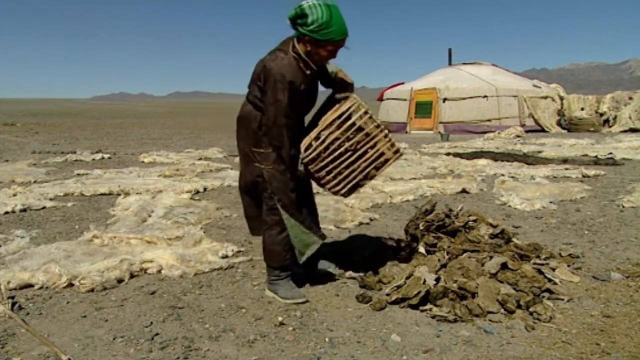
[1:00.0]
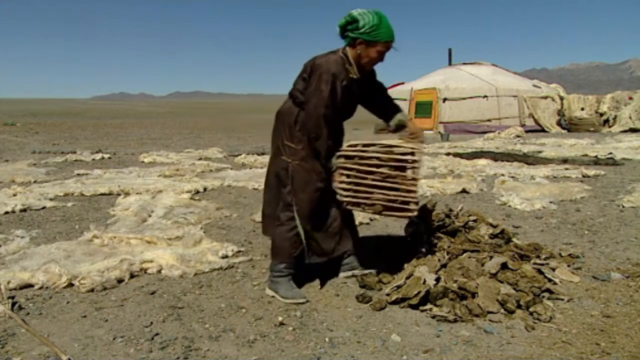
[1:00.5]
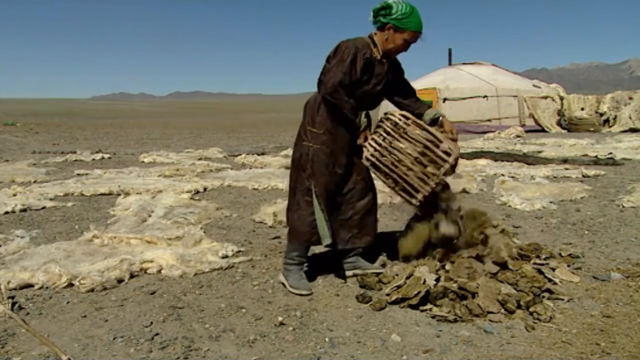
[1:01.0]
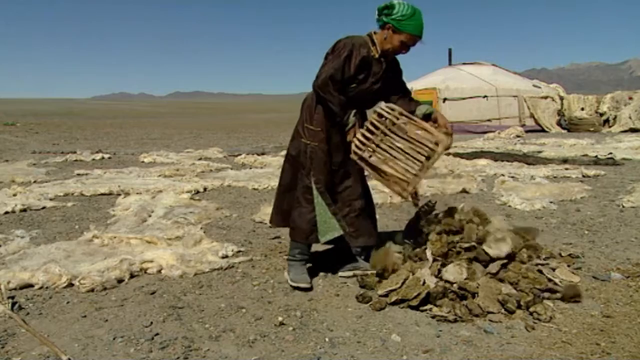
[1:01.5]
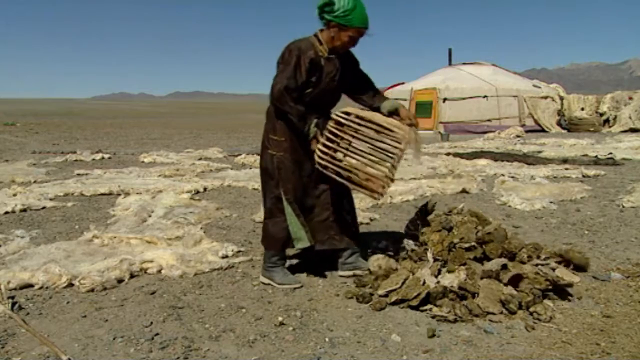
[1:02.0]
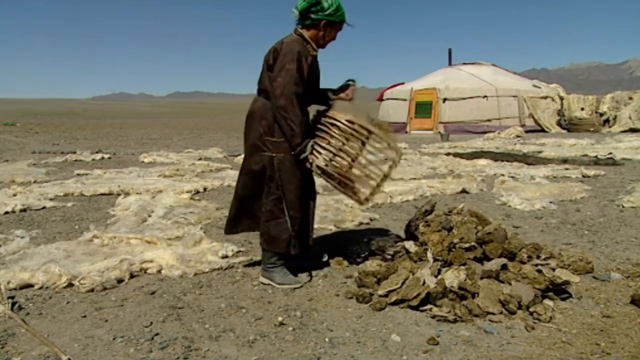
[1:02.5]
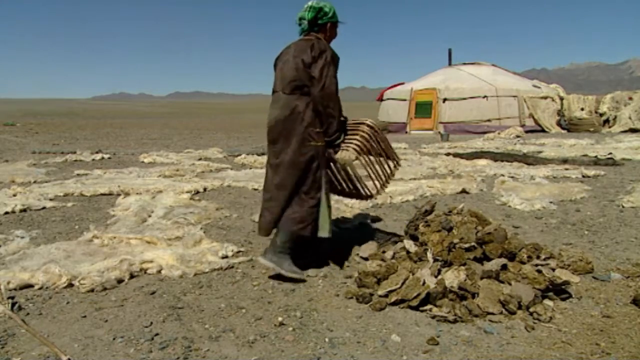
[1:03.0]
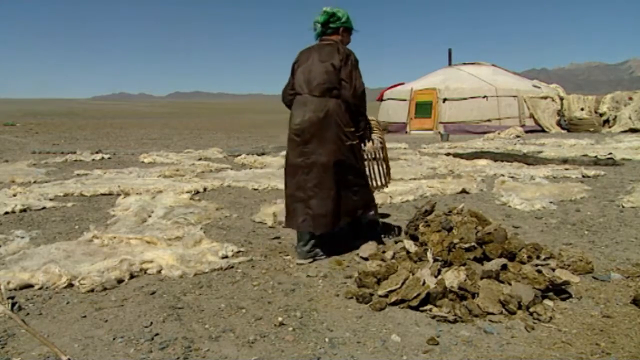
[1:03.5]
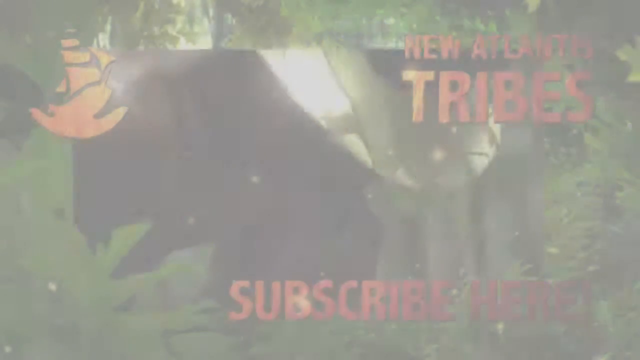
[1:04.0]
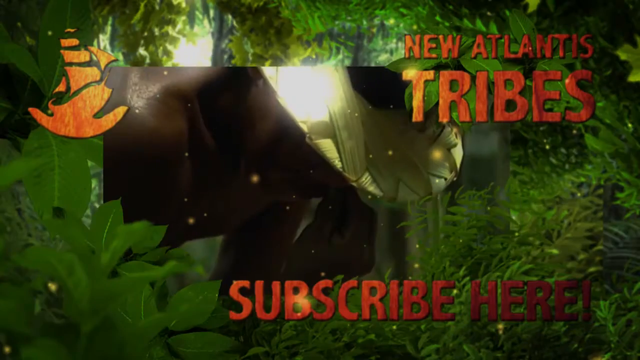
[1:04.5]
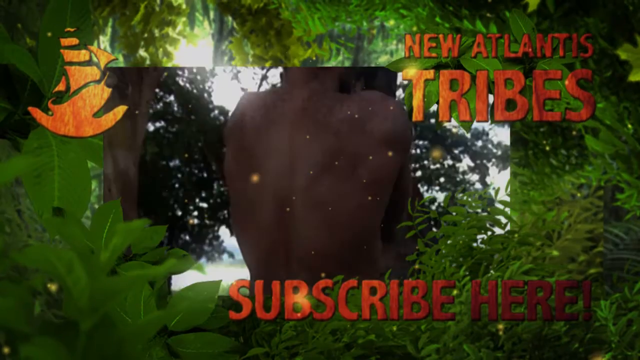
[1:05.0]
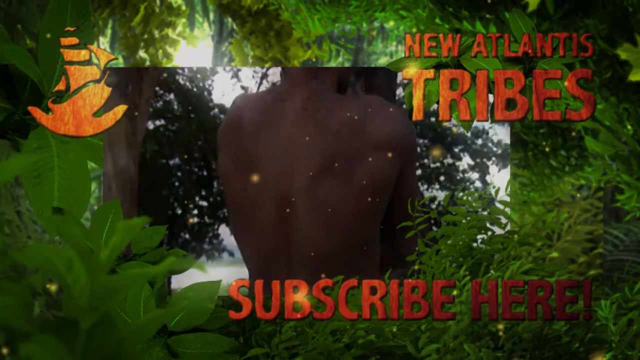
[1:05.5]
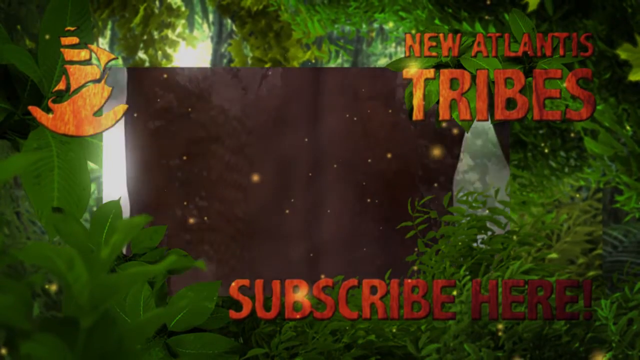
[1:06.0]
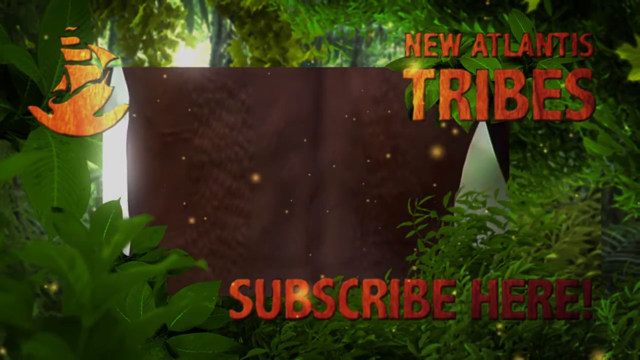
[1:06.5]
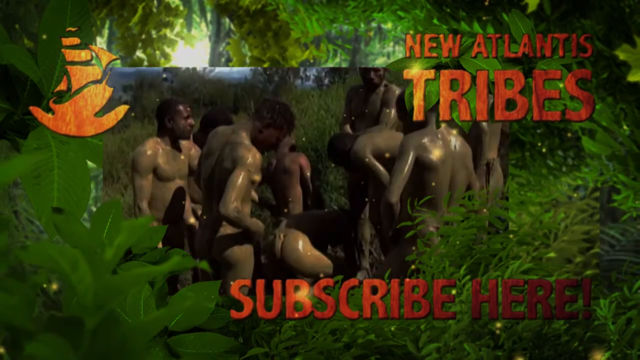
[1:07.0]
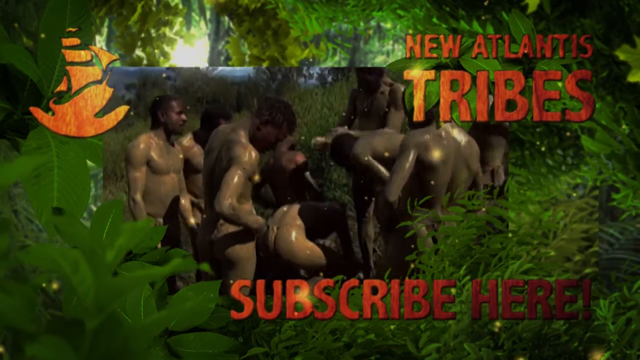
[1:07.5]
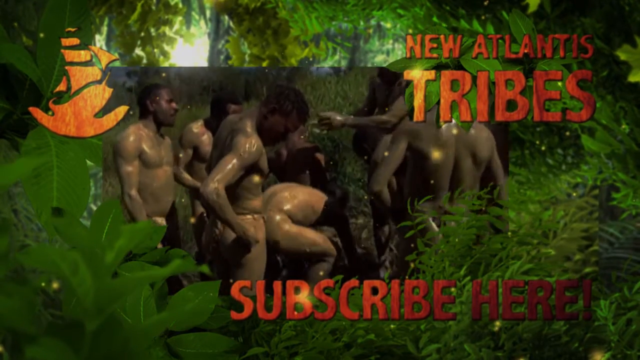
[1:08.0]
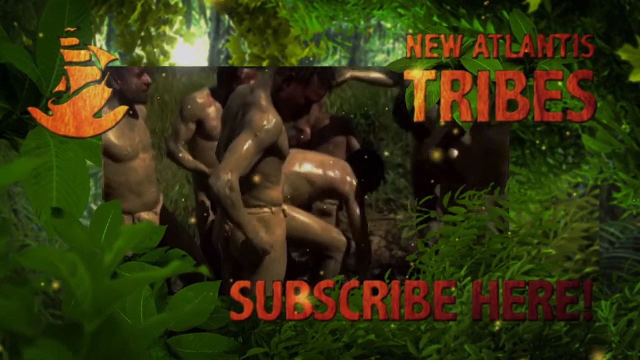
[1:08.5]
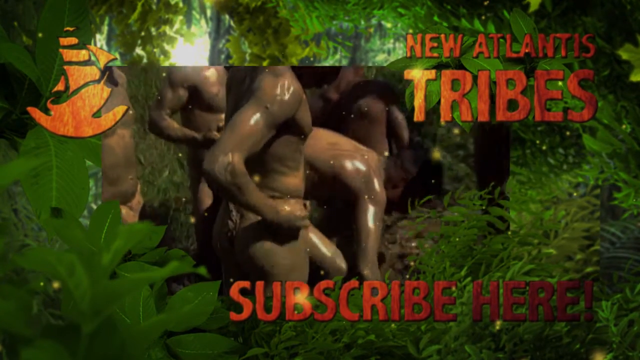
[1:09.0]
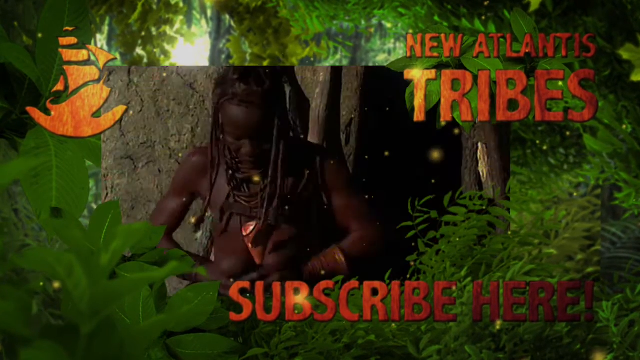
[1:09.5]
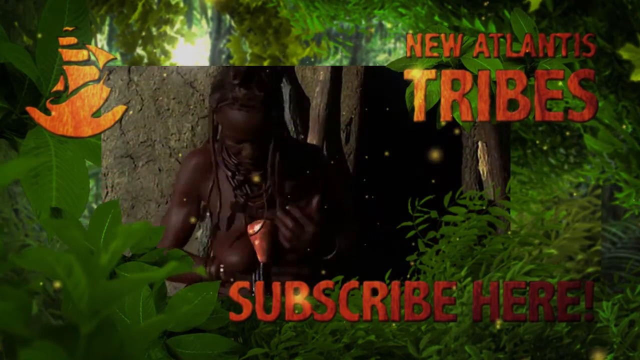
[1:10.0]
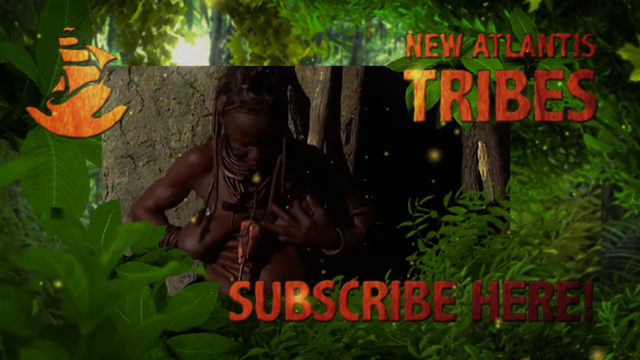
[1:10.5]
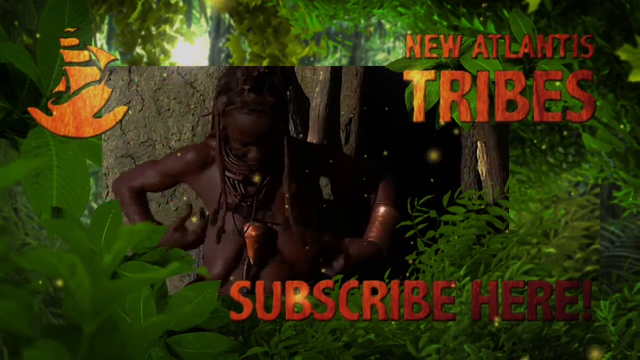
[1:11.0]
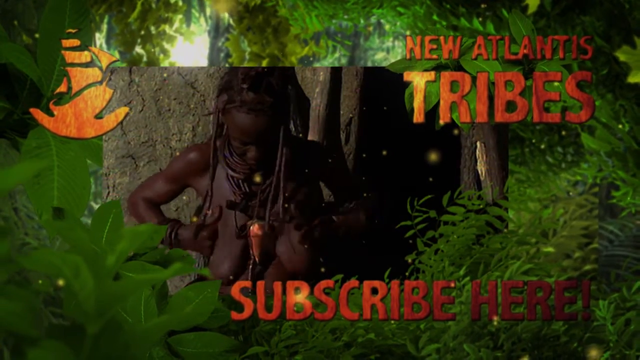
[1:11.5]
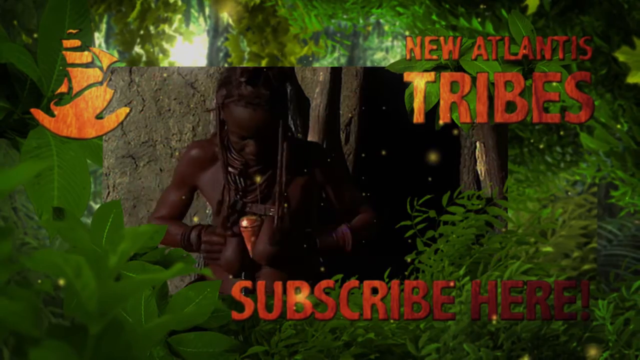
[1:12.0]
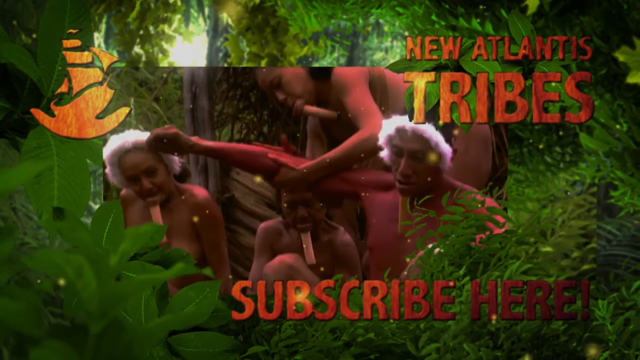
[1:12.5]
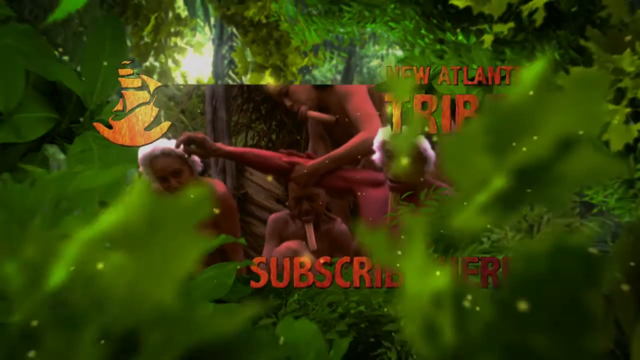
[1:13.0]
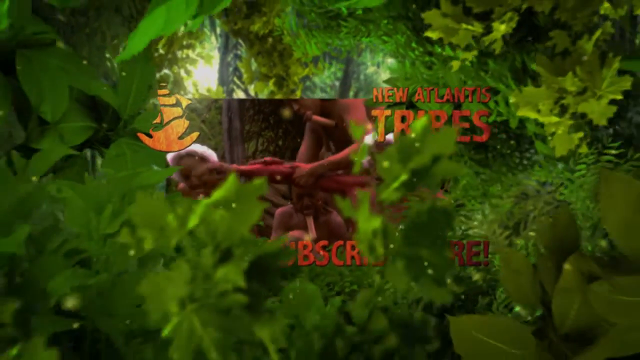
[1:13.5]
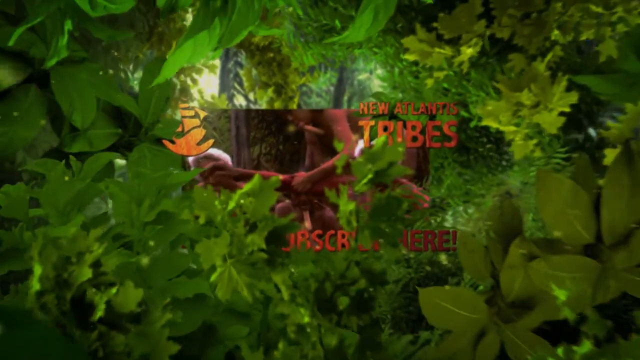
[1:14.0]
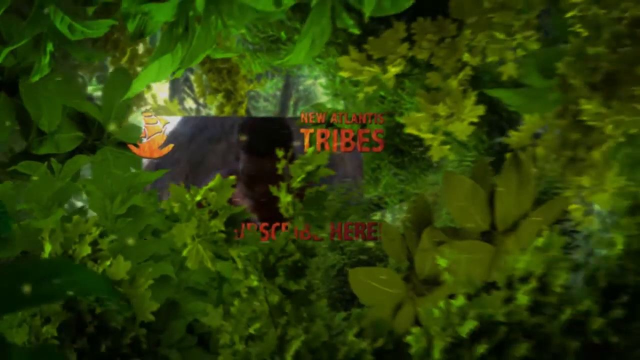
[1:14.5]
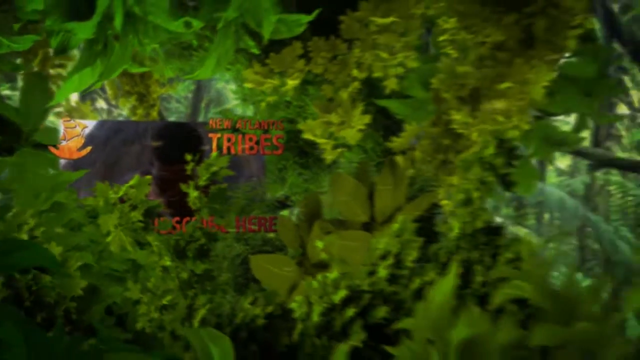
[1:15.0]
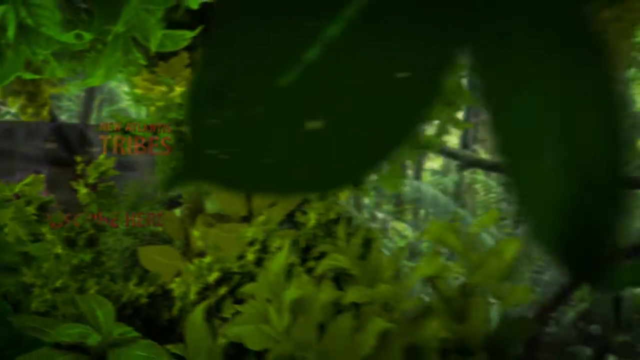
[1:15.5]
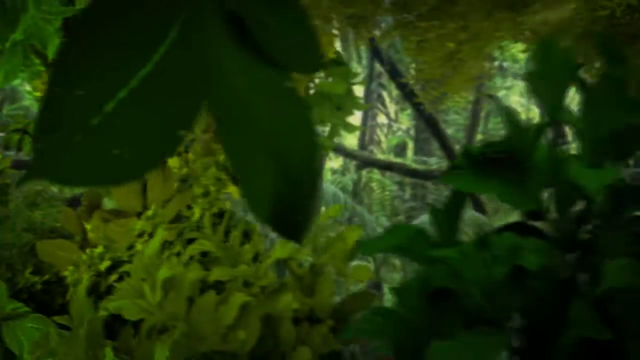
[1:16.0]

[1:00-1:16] A wooden bucket is held in hand. The woman is in a dress with a green scarf tied on her head. Beside her are things like animals lying down, and a tent is in the background. She holds the bucket of materials she is carrying and turns it upside down, pouring the materials down onto a spot where the same kind of materials are already piled. The video then transitions to another screen containing a box where videos are displayed. The upper part shows trees, a forest background; on the left is a logo; on the right, text reads "New Atlantis Tribes"; and on the lower part, text reads "Arabia". Inside the square where the videos play, some people are naked and seem to be bathing. Then the woman is seen smearing something on her body, apparently bathing.